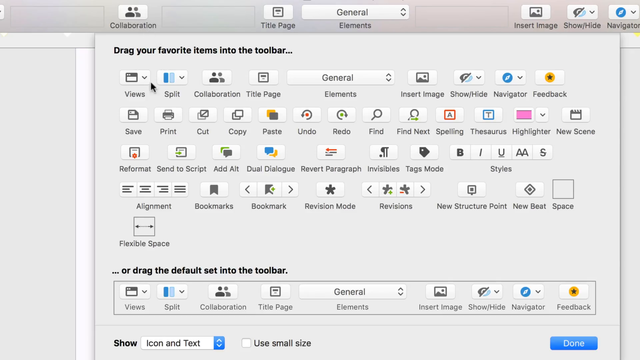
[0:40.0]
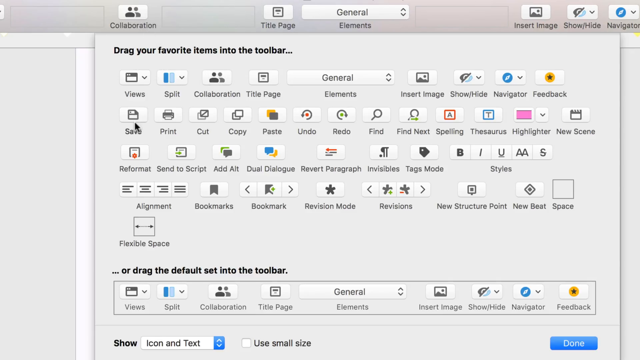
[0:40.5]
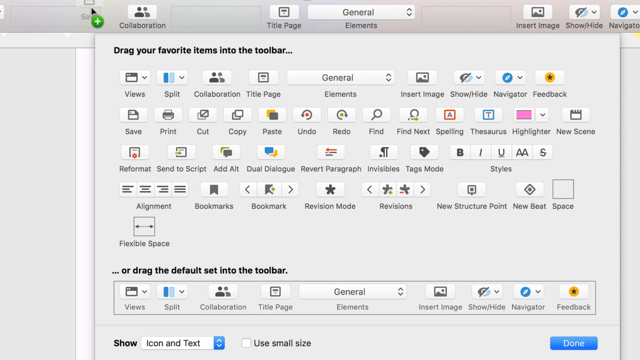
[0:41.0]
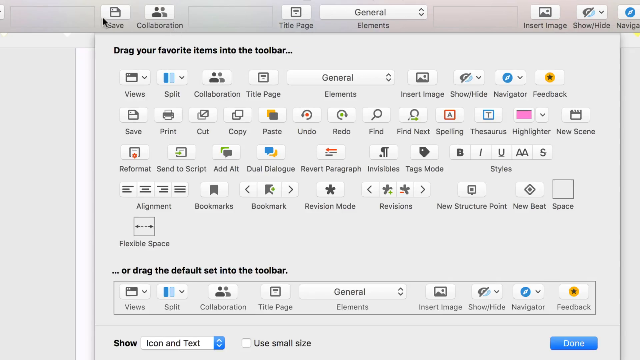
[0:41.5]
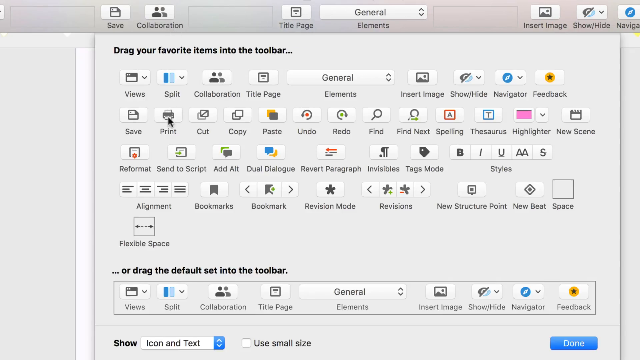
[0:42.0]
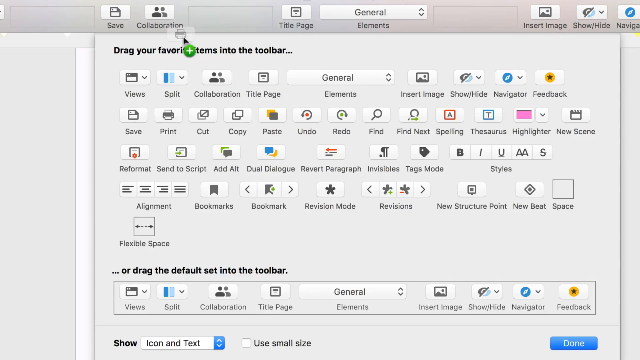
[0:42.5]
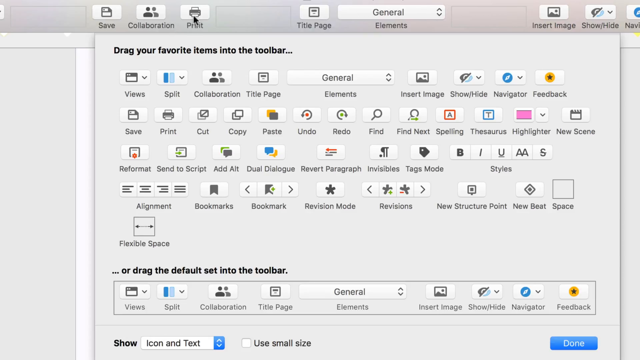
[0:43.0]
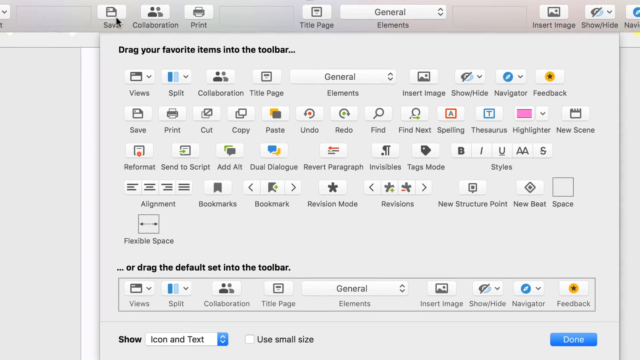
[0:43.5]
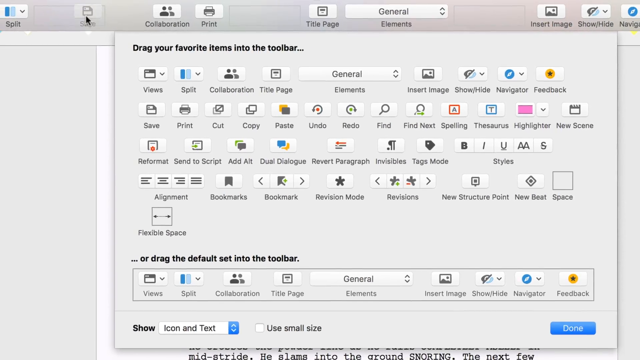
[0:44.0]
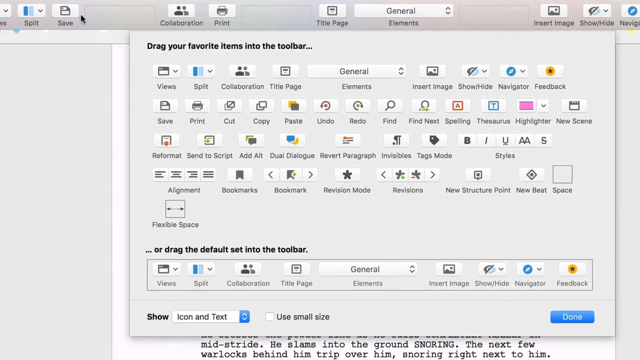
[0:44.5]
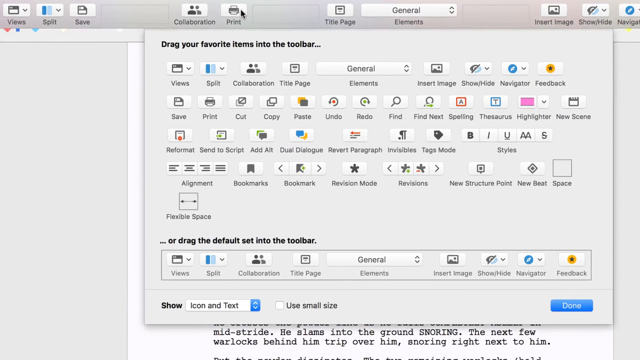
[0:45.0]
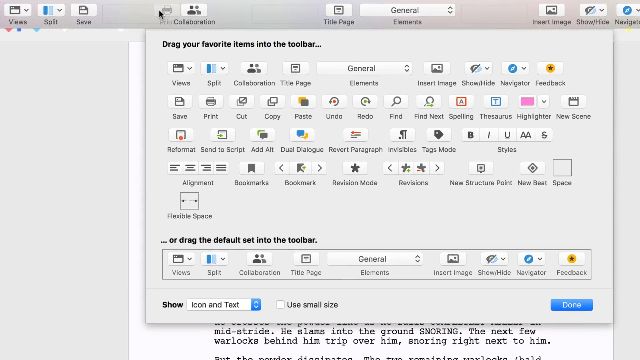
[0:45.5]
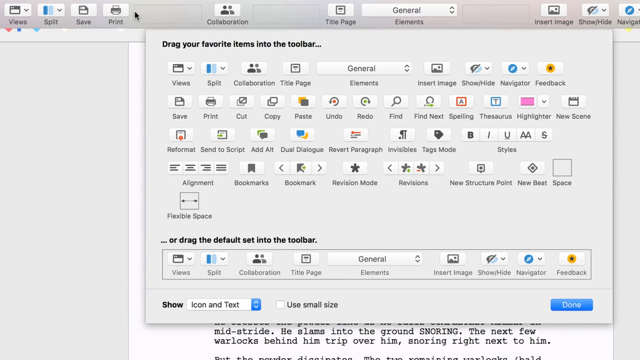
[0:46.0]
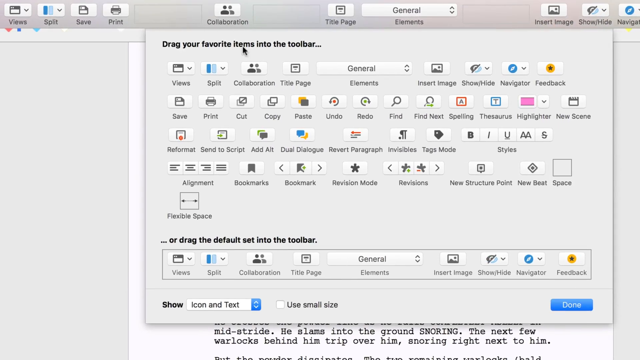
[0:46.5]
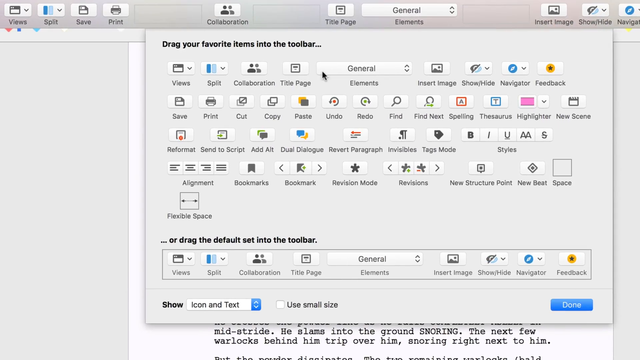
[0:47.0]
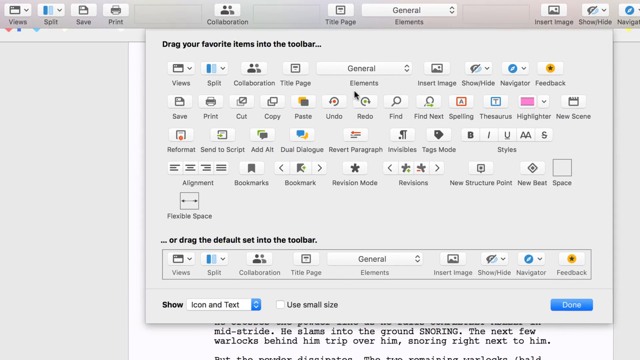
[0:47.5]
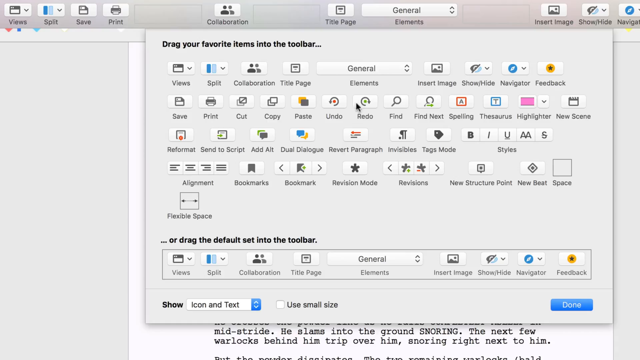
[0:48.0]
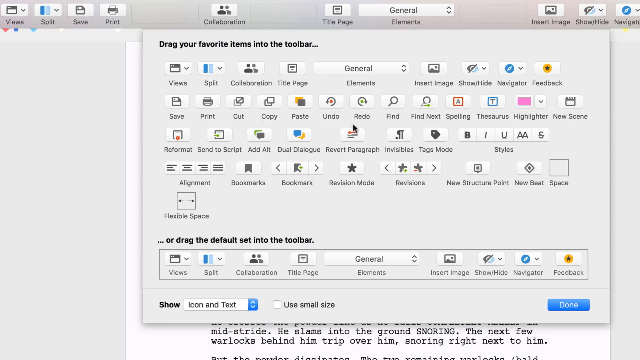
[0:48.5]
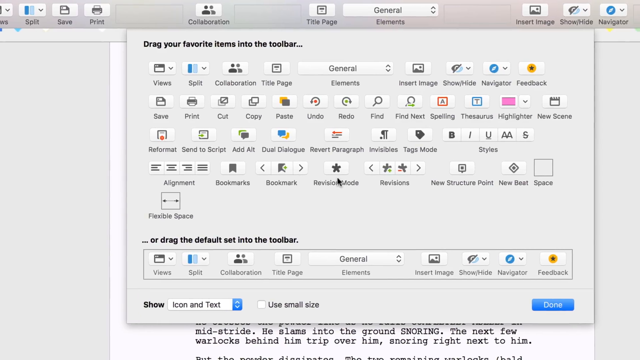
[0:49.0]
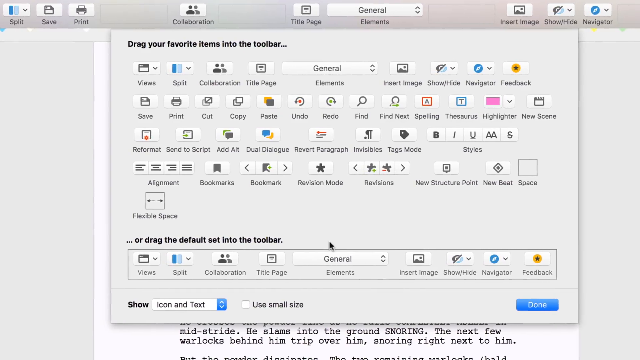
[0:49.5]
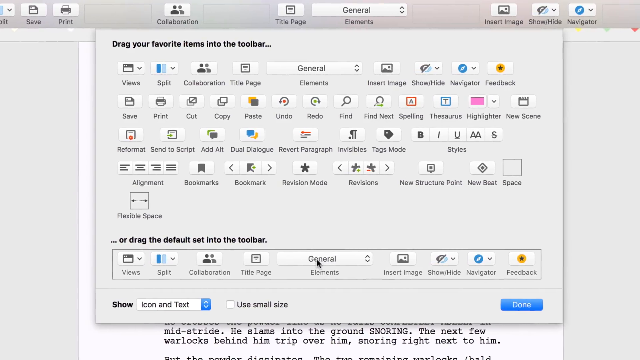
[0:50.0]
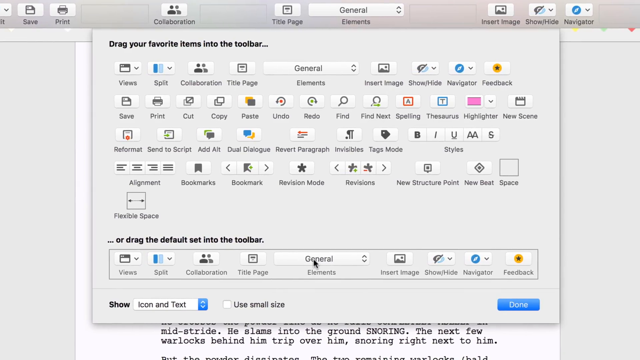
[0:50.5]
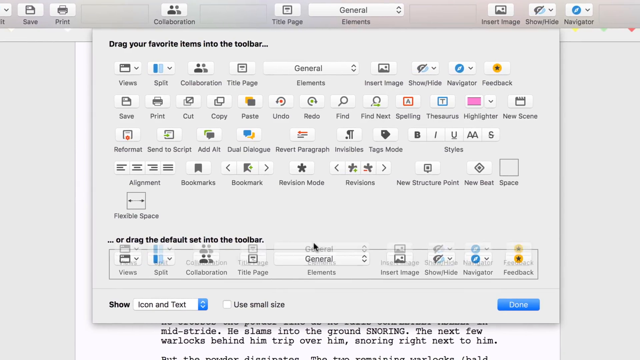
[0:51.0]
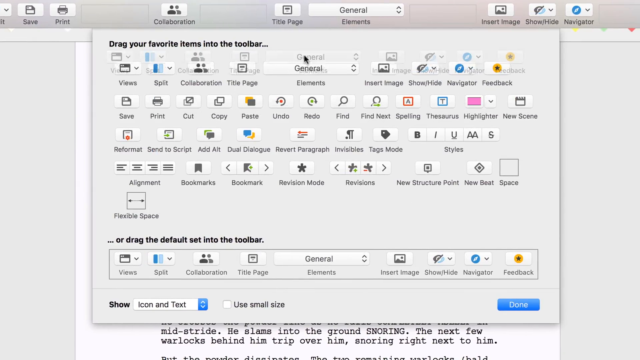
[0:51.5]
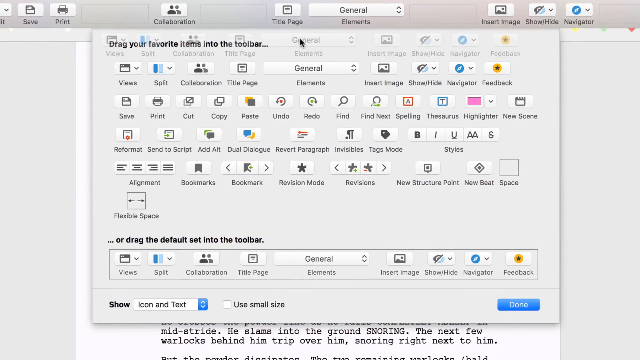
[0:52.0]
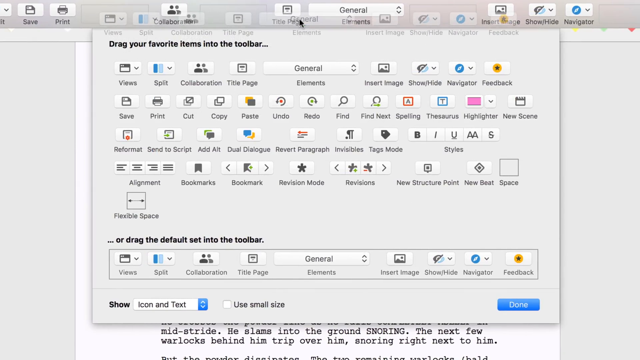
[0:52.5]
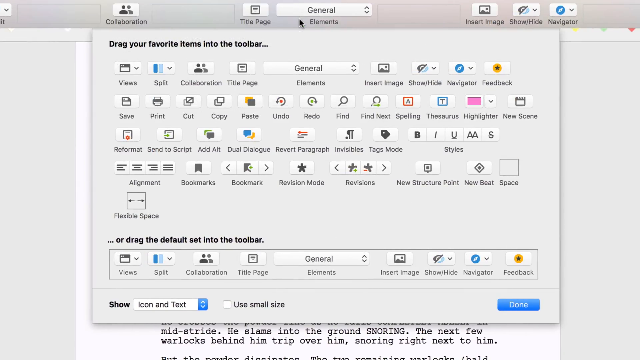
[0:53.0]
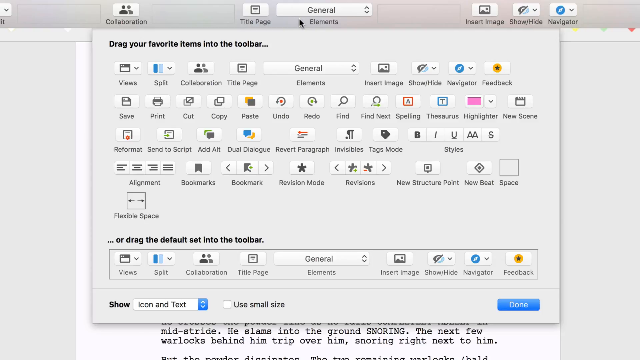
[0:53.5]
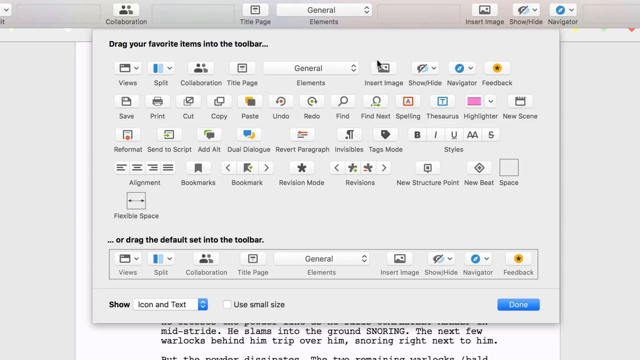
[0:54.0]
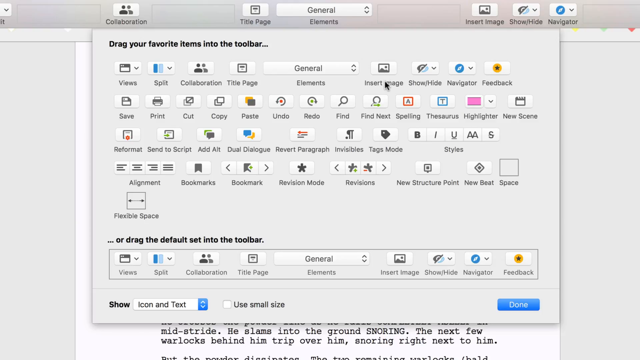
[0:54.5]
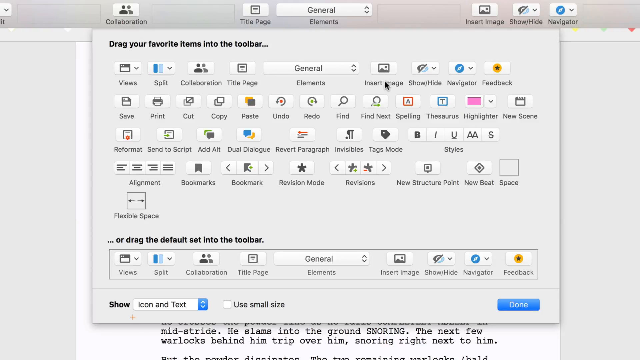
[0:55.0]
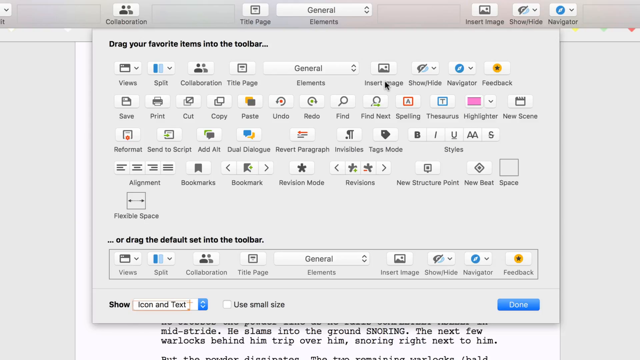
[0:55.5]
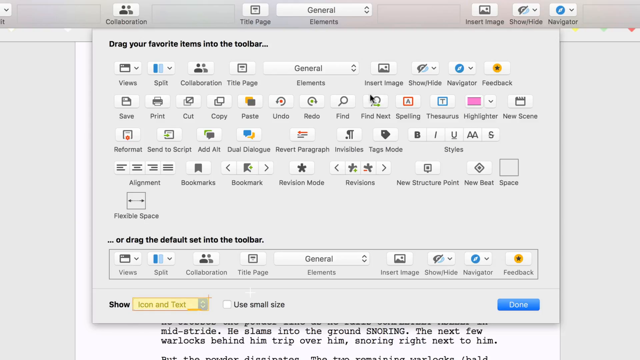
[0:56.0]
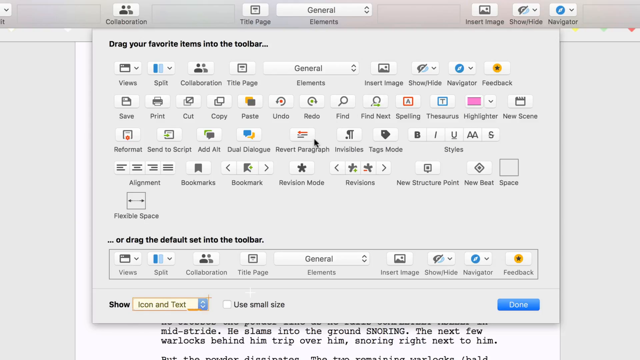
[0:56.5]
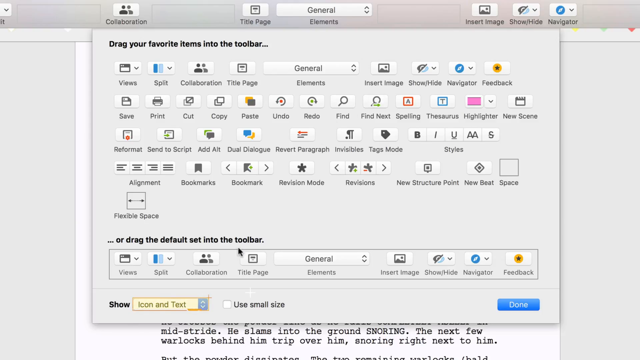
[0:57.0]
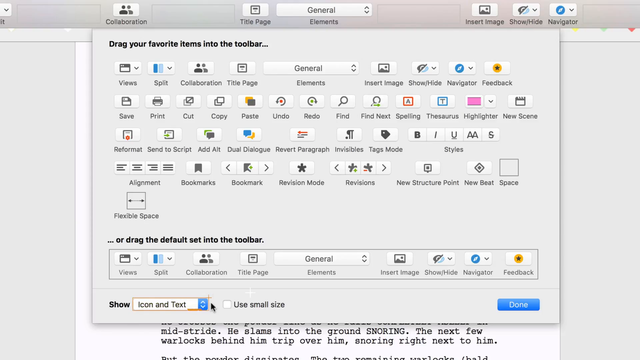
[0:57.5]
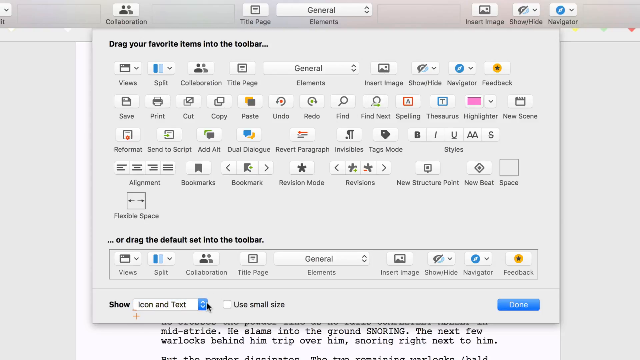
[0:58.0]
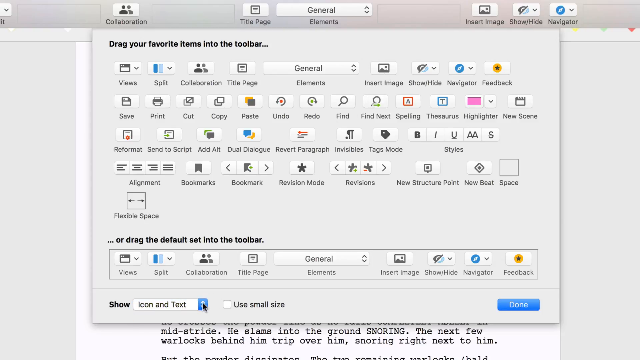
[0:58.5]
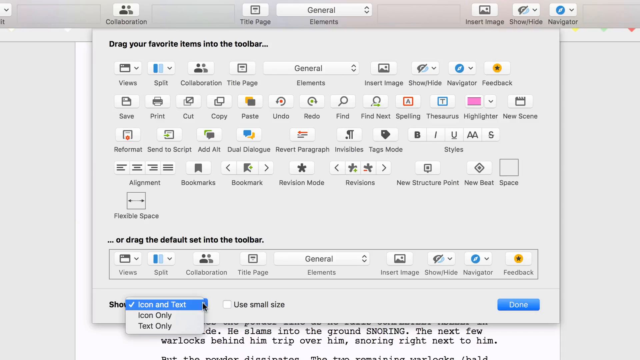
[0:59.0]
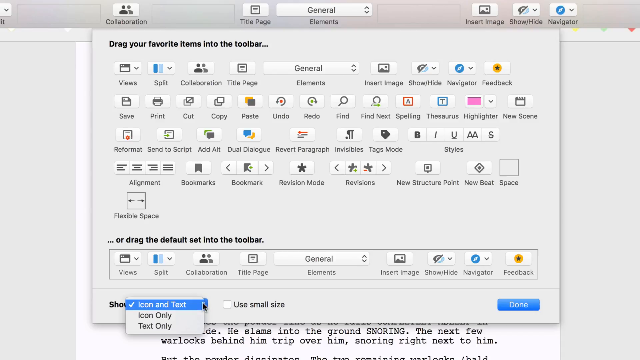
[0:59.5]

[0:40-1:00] In Final Draft, a customization chart for the toolbar is shown with lots of different icons on a large screen in the center of the image. The mouse cursor moves around, pulling icons from the bottom to the top of the screen. Collaboration is already at the top; the cursor pulls a save option to the top, then a print option, then moves the save option to the left and the print option to the left, leaving Collaboration where it is, building a custom toolbar. The camera zooms out a little and then starts to zoom to the right as the cursor moves down to grab a whole set of toolbar items. A section at the bottom says "drag the default set into the toolbar," and the default set is grabbed and moved up into the toolbar at the top. The cursor then moves back to the bottom and clicks on an item that says "show," opening a drop-down menu in which "icon and text" is shown.